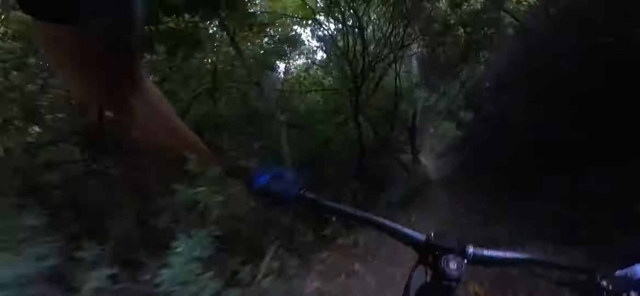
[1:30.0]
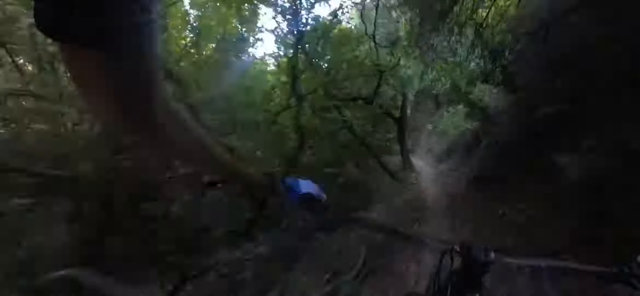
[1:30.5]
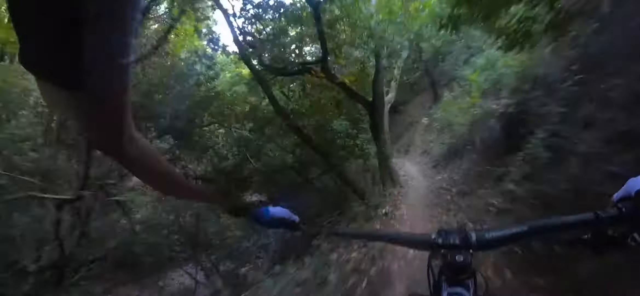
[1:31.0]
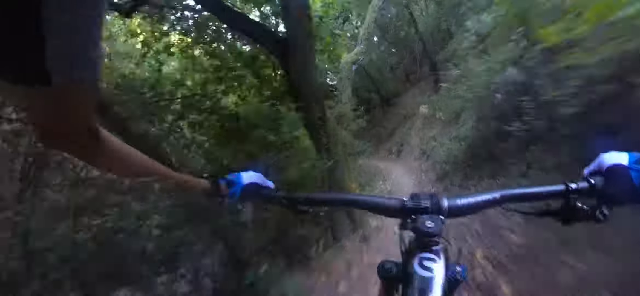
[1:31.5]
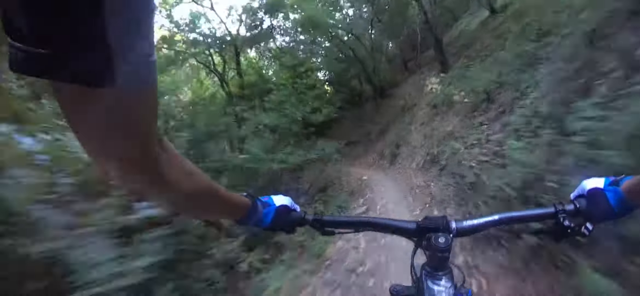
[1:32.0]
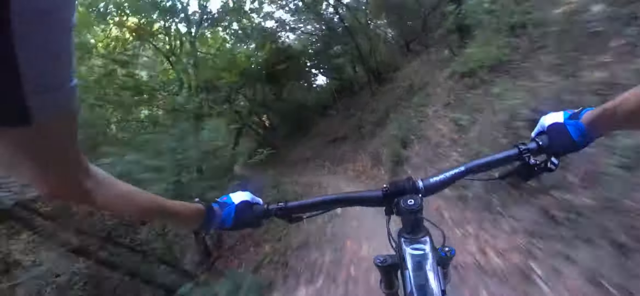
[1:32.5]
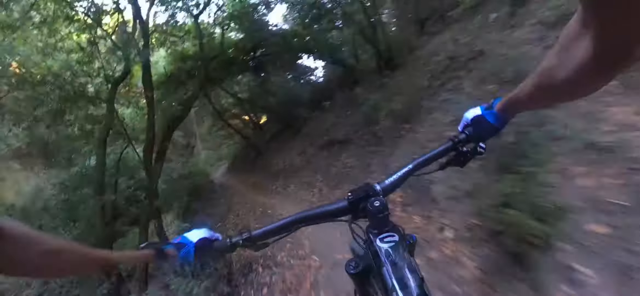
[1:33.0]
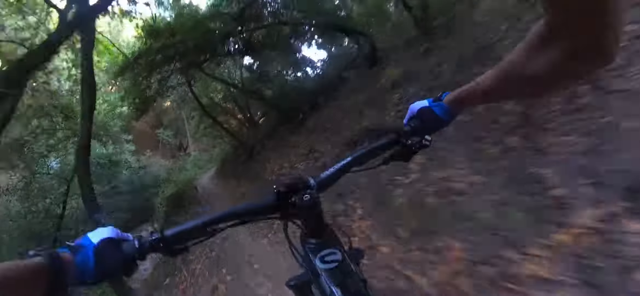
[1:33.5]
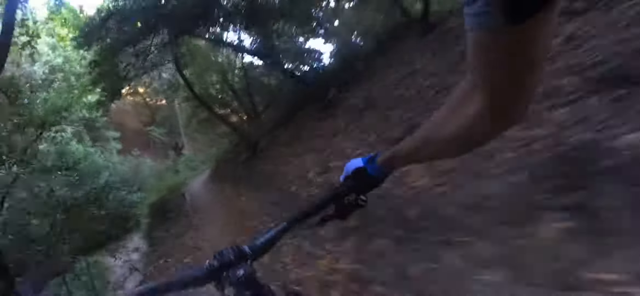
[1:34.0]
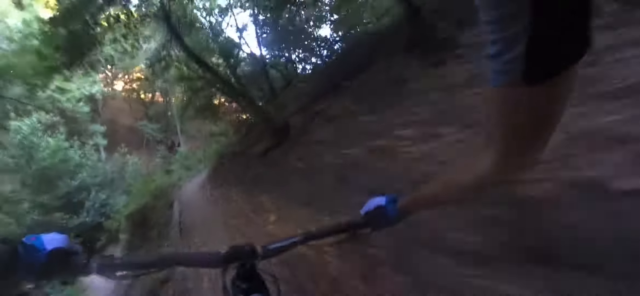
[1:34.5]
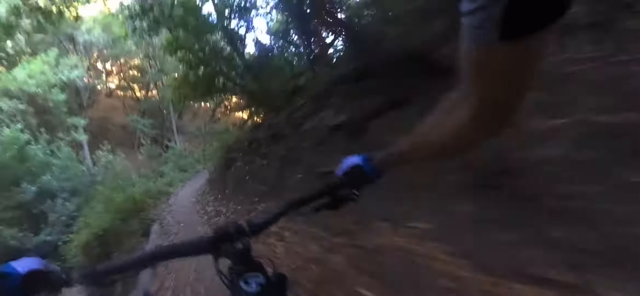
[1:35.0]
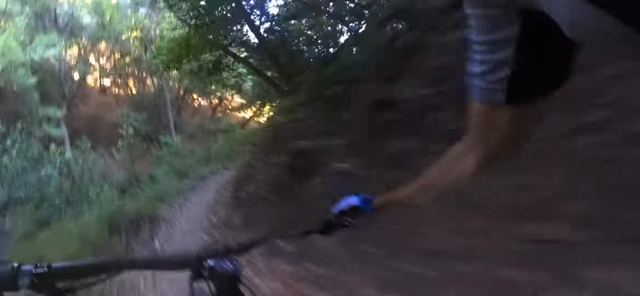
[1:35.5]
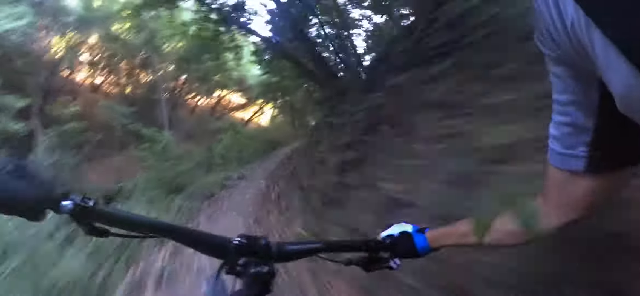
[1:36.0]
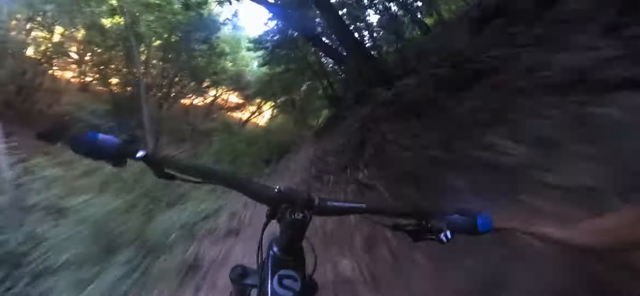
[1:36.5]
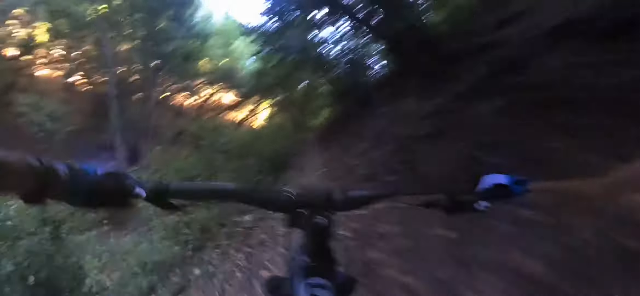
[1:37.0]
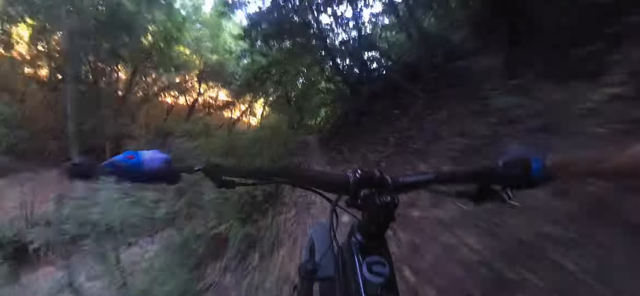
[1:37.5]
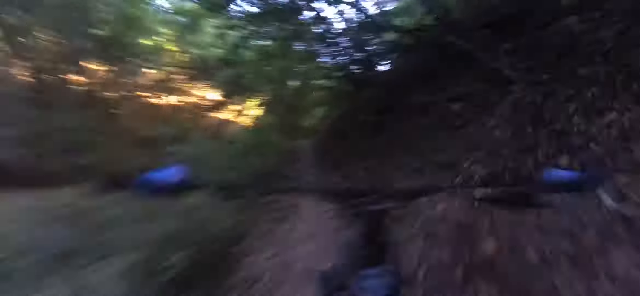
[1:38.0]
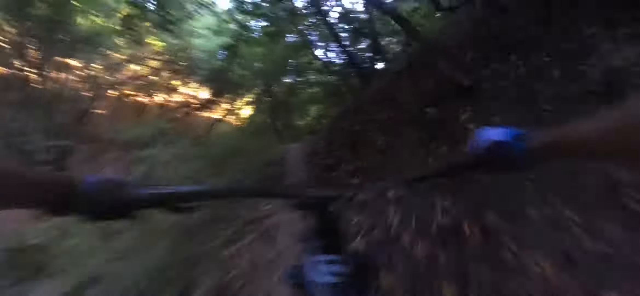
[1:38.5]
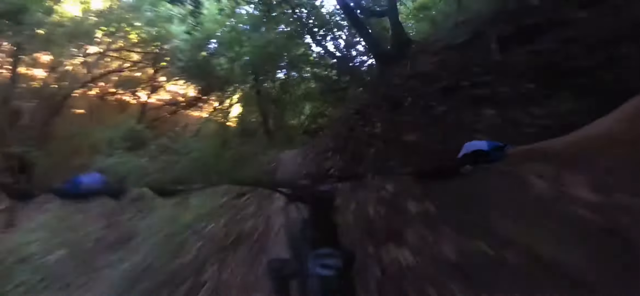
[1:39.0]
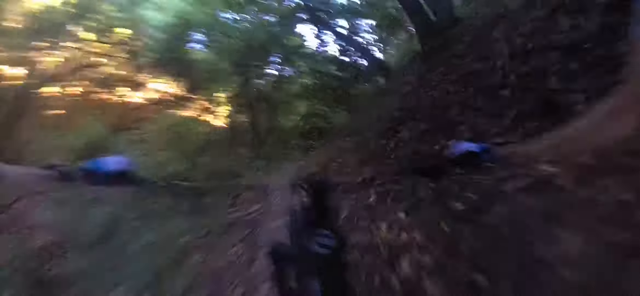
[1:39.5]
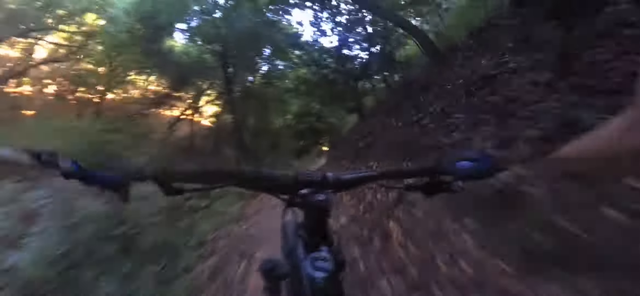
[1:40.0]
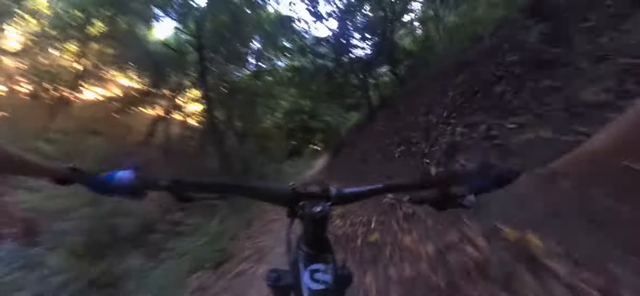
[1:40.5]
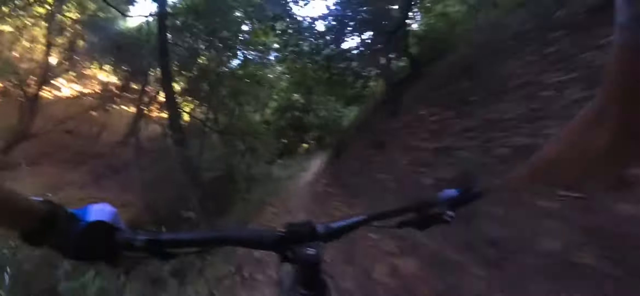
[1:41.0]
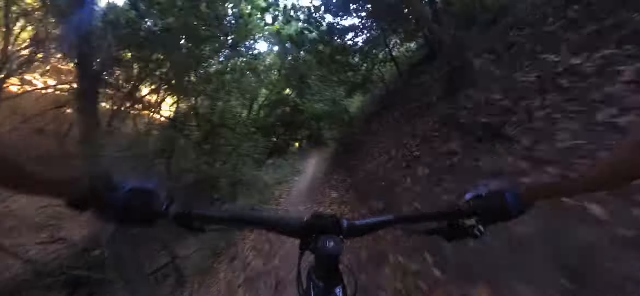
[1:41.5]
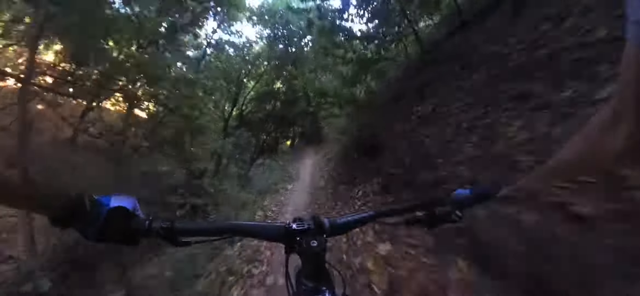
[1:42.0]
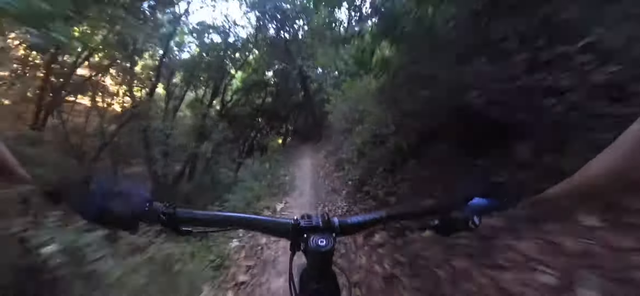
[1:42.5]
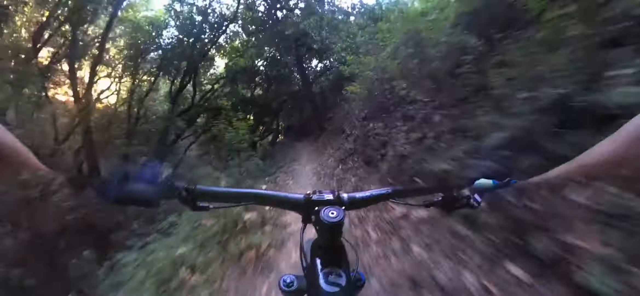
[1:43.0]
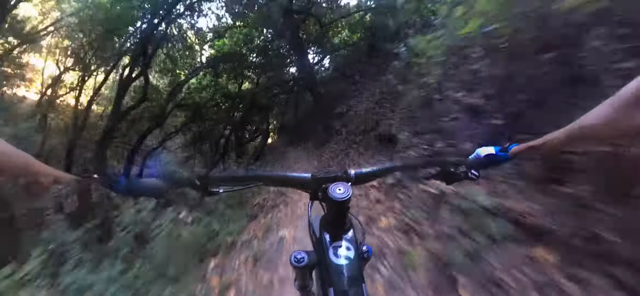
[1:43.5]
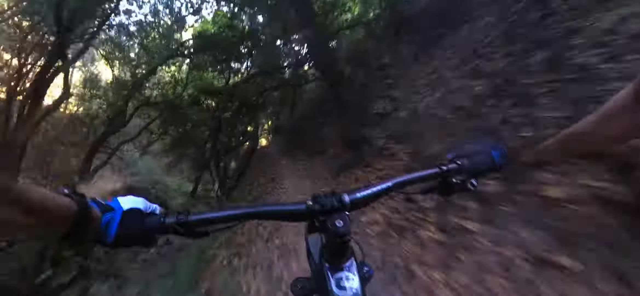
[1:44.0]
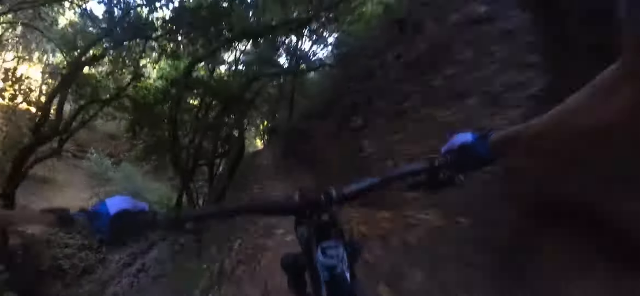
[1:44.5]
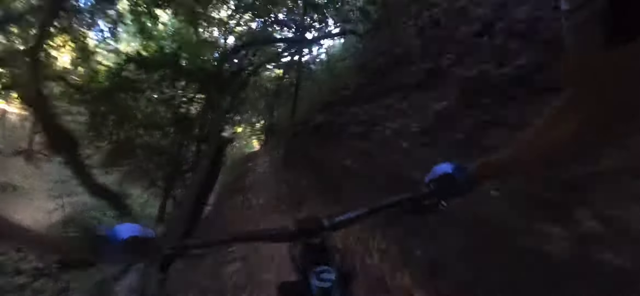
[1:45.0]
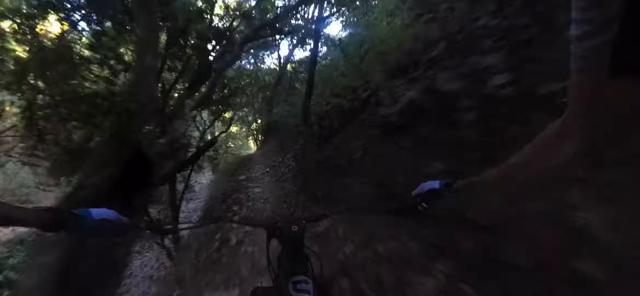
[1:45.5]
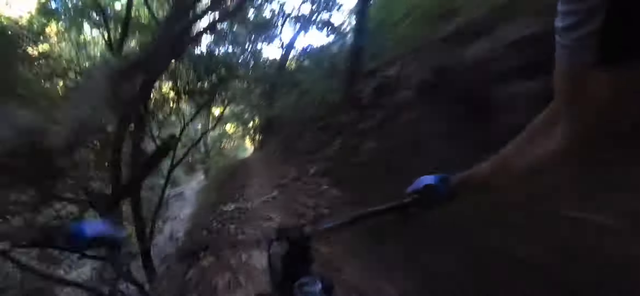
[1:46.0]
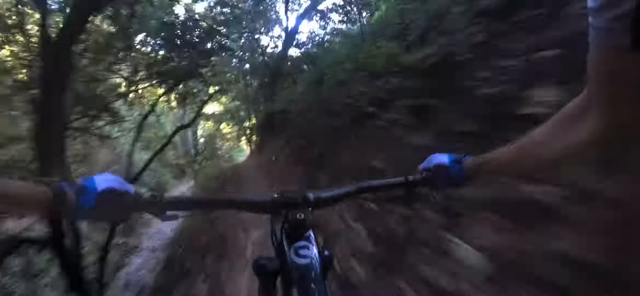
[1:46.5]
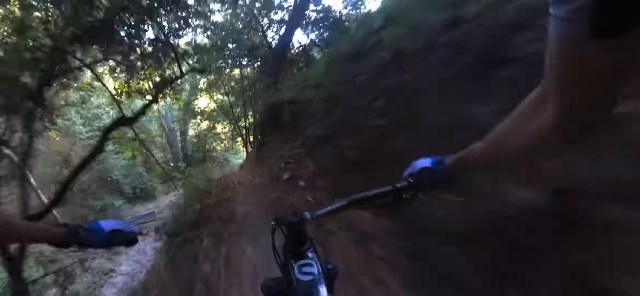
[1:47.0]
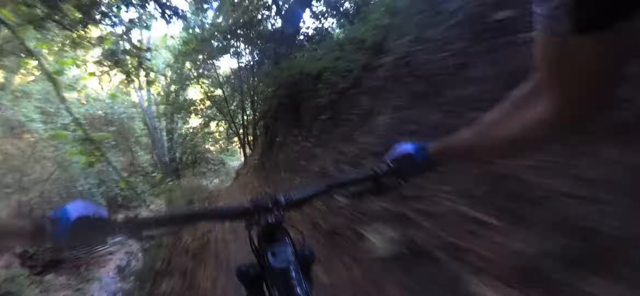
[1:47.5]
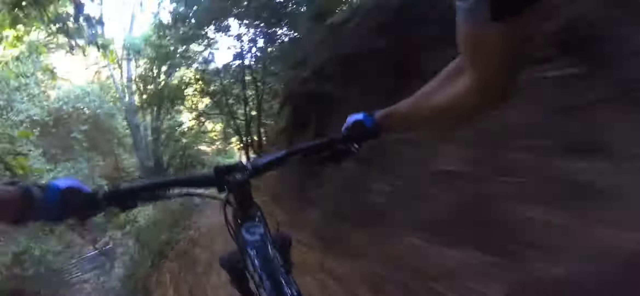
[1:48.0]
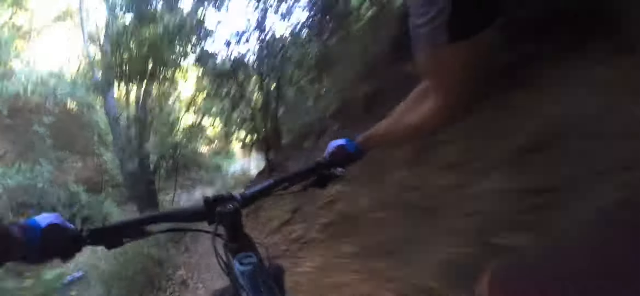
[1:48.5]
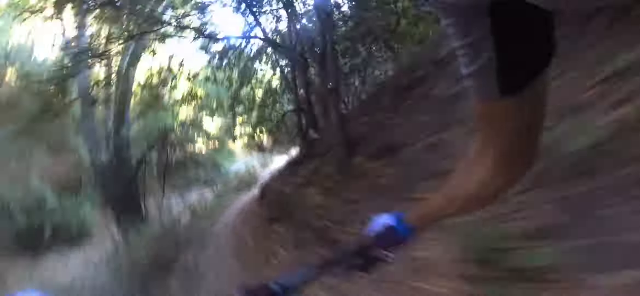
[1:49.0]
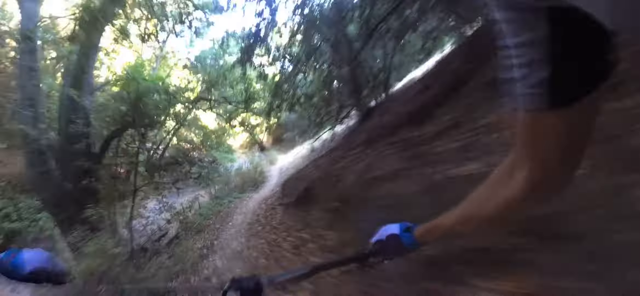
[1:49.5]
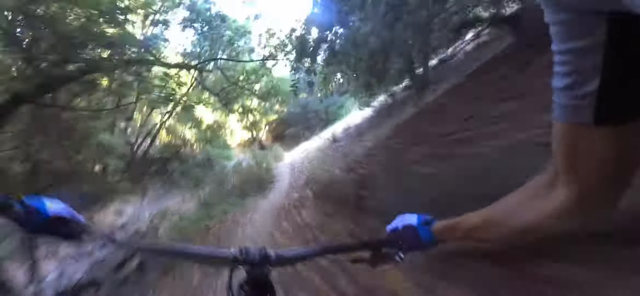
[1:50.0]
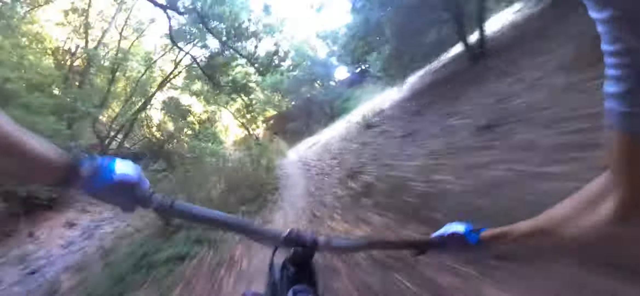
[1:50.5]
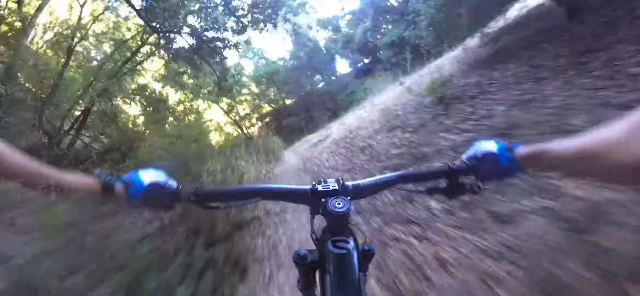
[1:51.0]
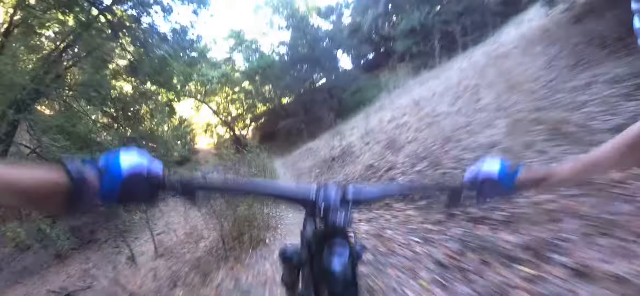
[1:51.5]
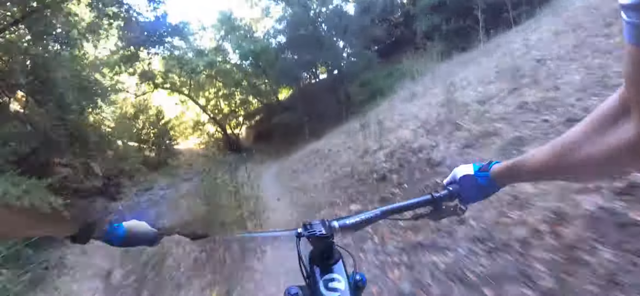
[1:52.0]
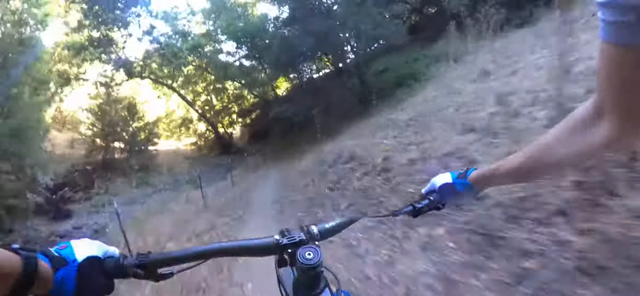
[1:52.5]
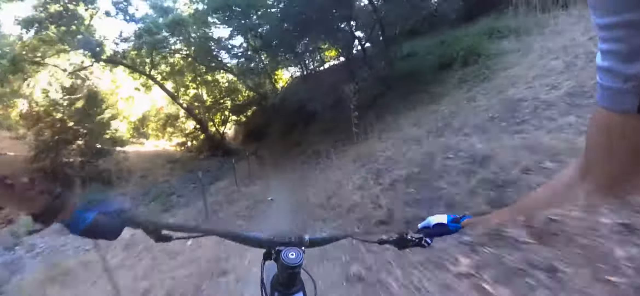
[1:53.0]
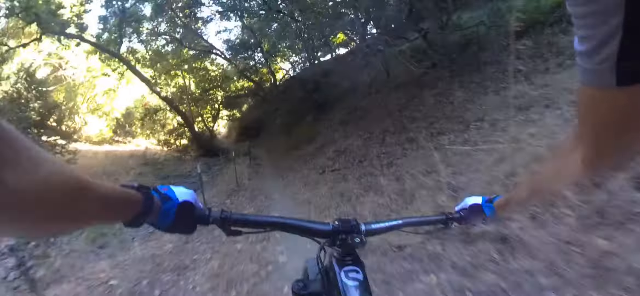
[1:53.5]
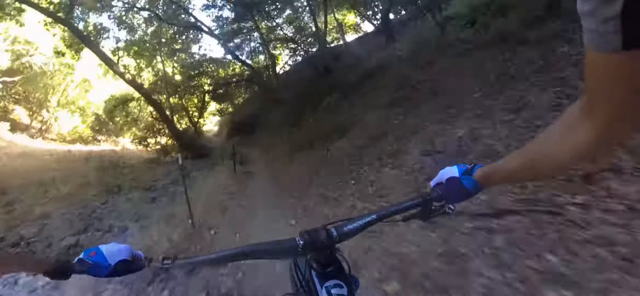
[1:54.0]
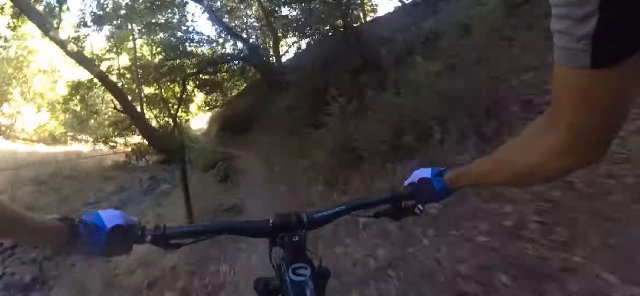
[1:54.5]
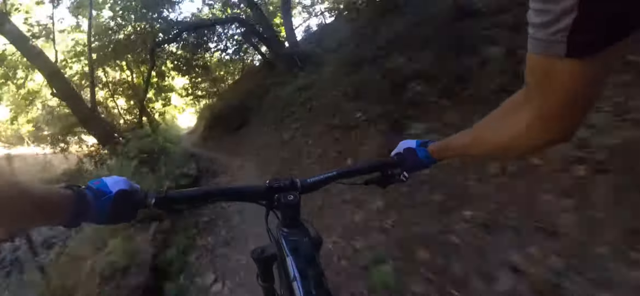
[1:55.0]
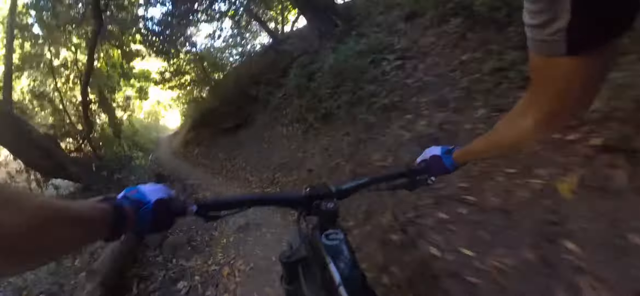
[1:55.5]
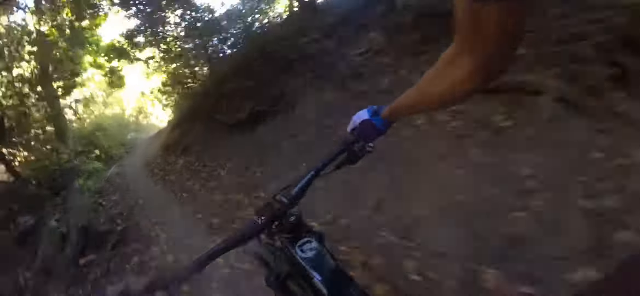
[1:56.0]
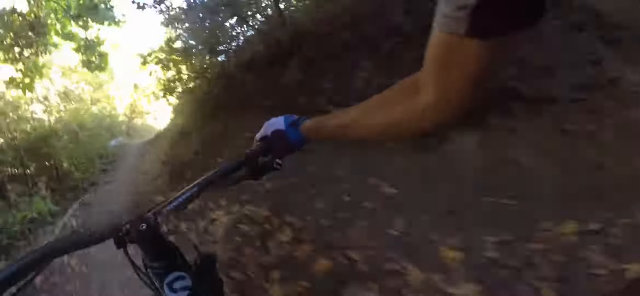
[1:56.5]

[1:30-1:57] A white cyclist wears gloves in two shades of blue, darker on the palm area and lighter over the knuckles, and rides a black bicycle, with the handlebar visible. His short-sleeved shirt is lighter around the bicep area and darker blue on the back of the triceps. He rides through a forest area on a dark brown dirt path that has been ridden on many times, passing trees, branches, small ravines and areas of higher elevation. The path becomes quite narrow where a section seems to sort of drop off dramatically. It is daytime, with sunlight visible in the distance, and he stays on the path.